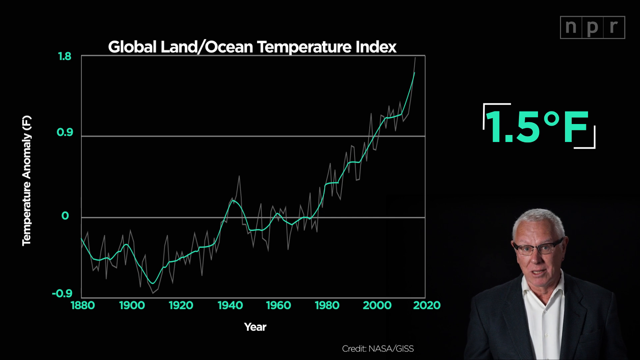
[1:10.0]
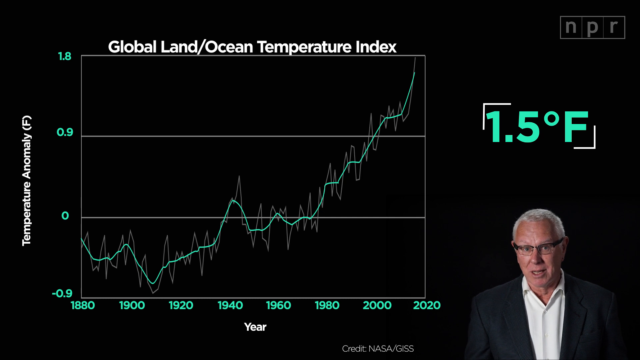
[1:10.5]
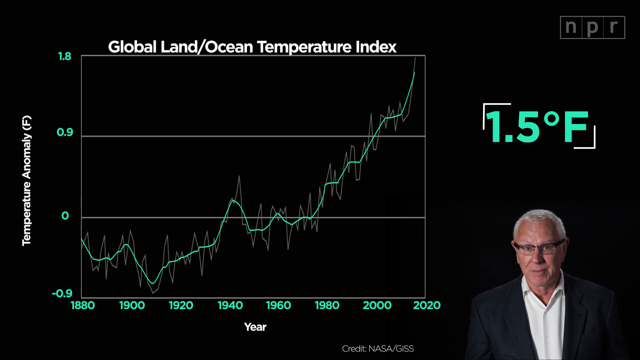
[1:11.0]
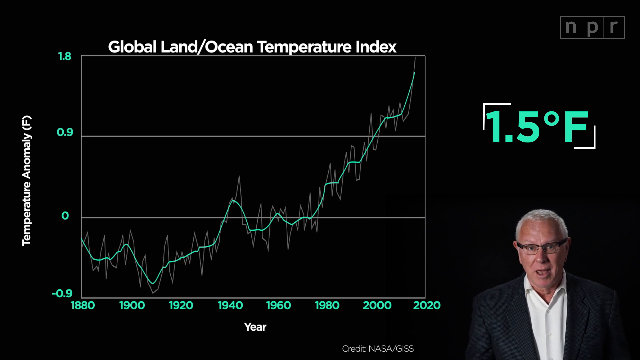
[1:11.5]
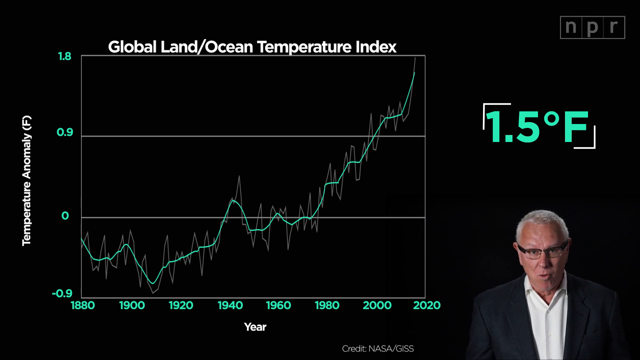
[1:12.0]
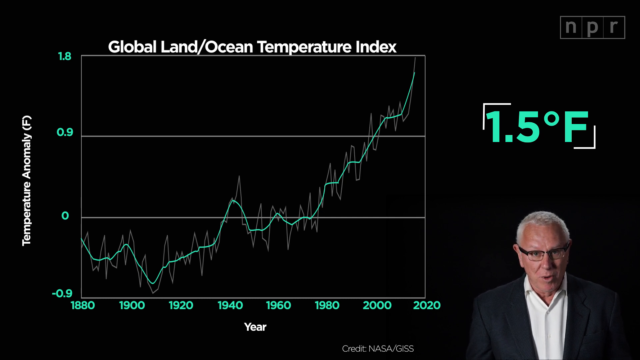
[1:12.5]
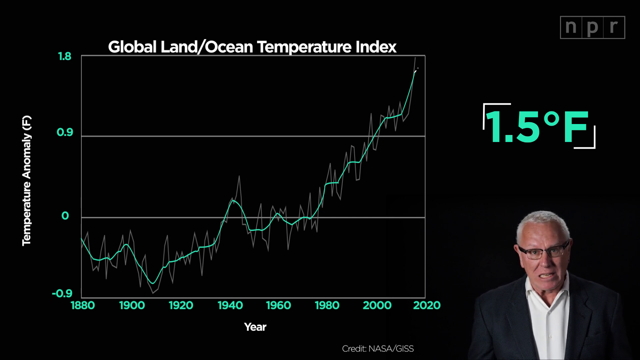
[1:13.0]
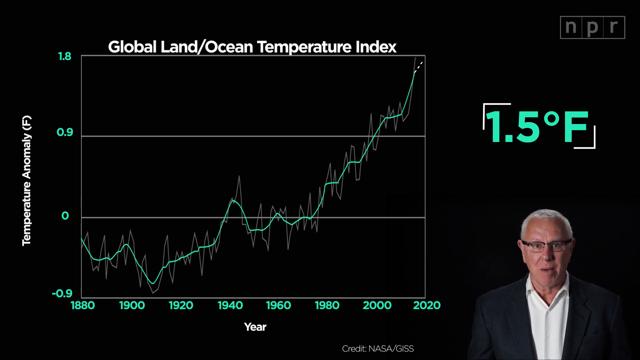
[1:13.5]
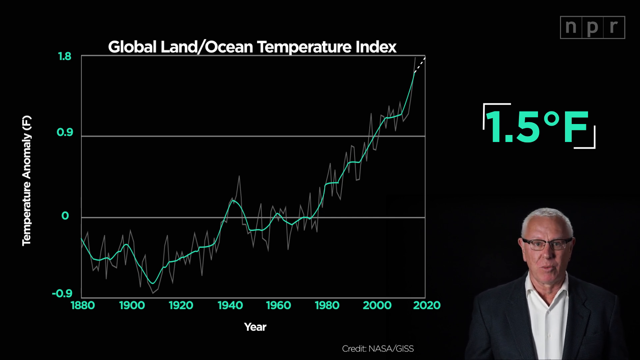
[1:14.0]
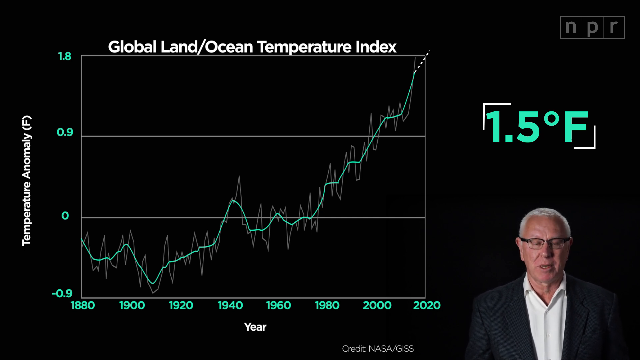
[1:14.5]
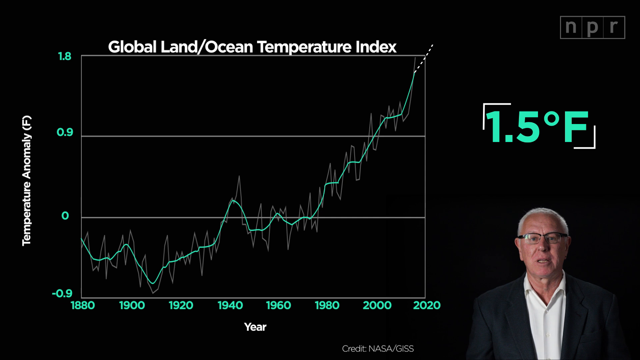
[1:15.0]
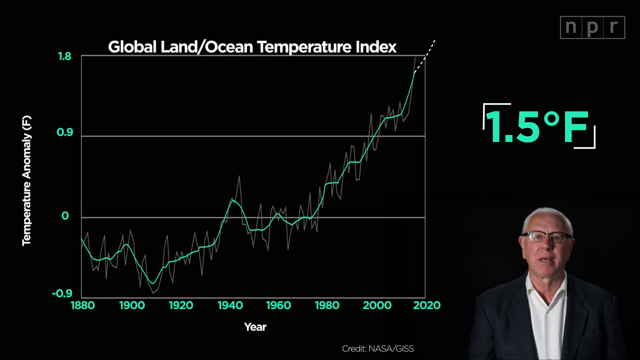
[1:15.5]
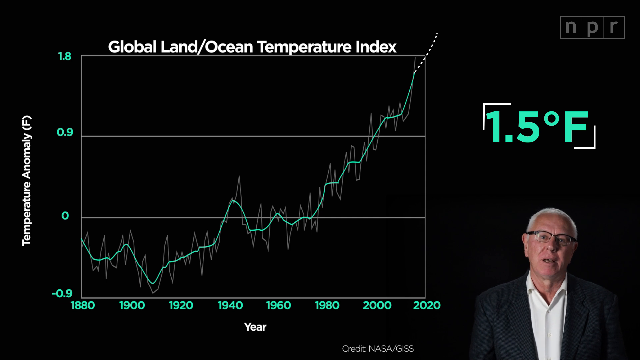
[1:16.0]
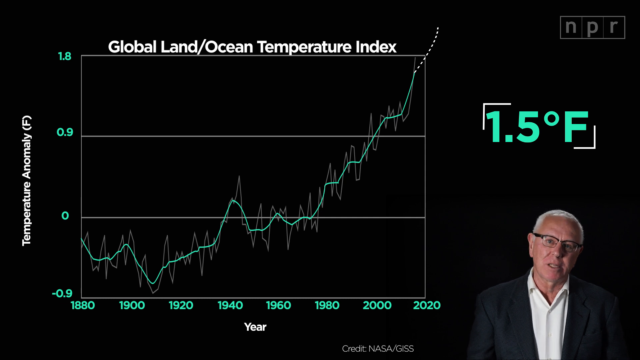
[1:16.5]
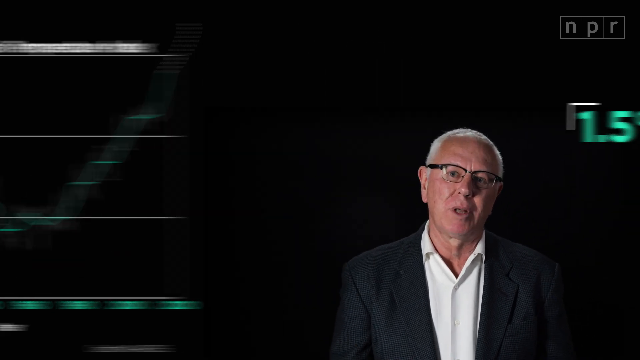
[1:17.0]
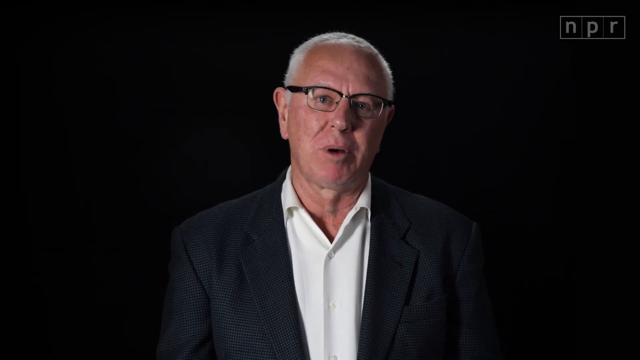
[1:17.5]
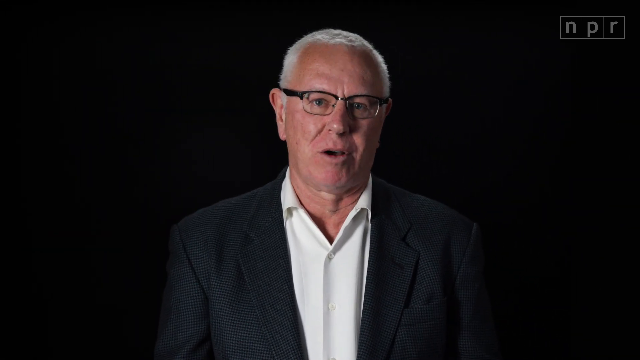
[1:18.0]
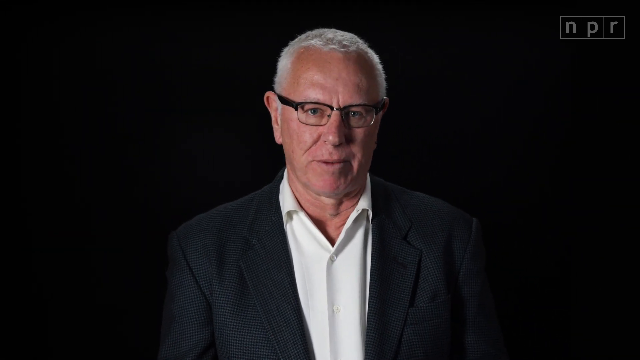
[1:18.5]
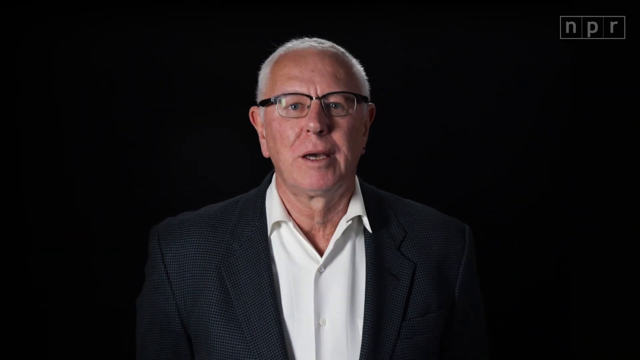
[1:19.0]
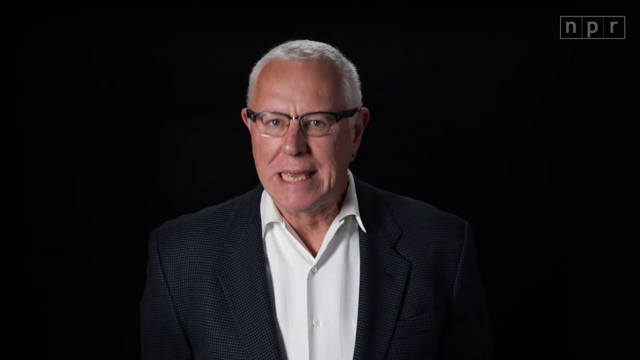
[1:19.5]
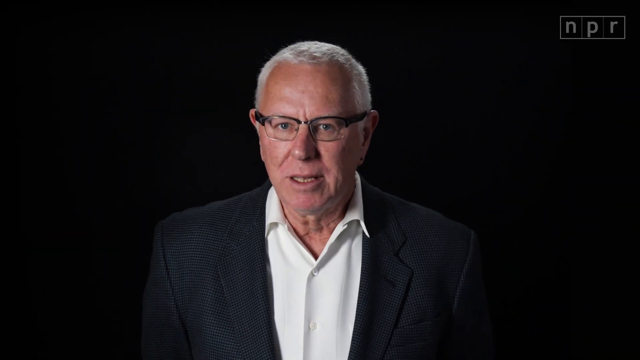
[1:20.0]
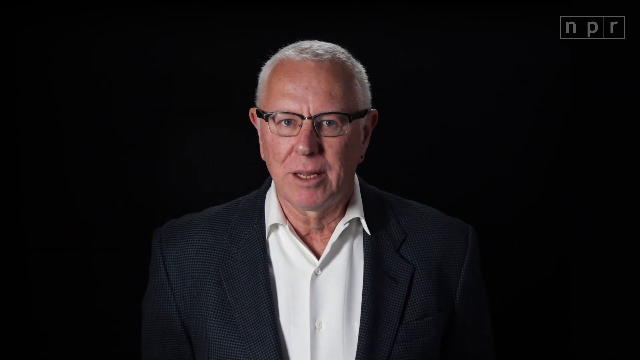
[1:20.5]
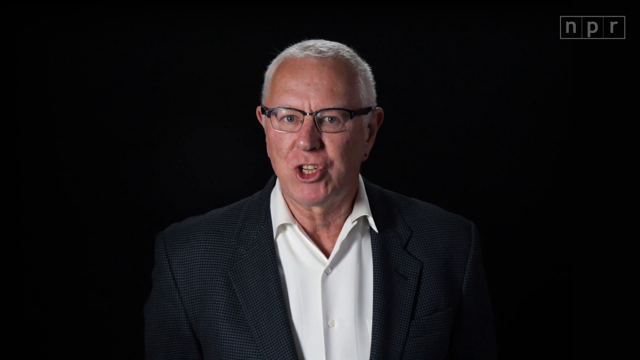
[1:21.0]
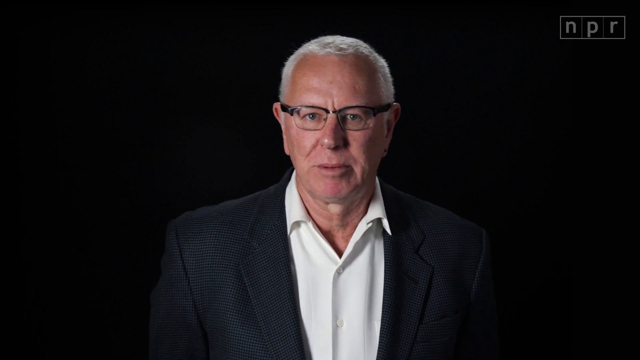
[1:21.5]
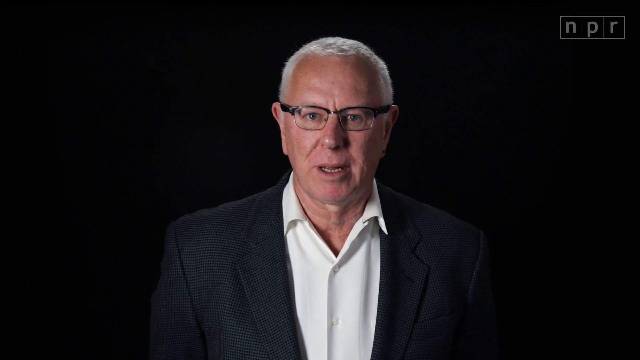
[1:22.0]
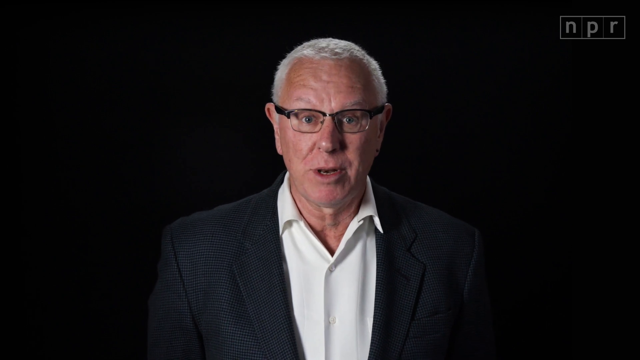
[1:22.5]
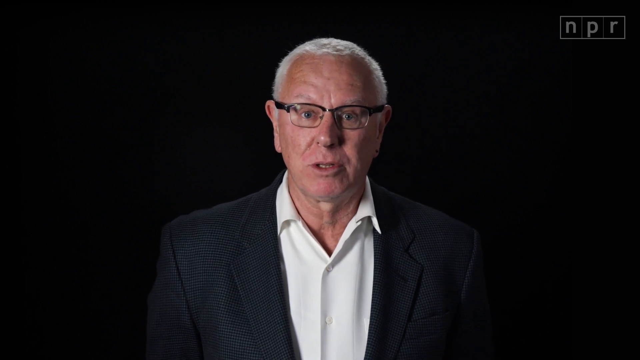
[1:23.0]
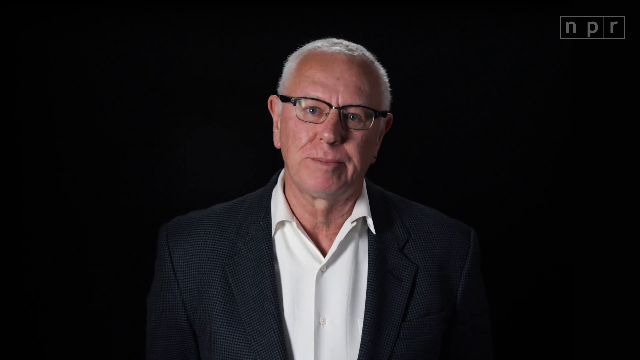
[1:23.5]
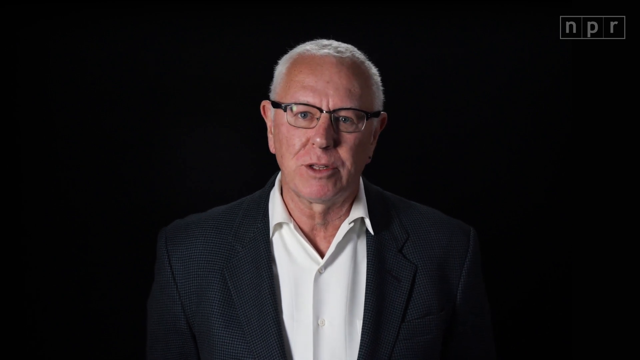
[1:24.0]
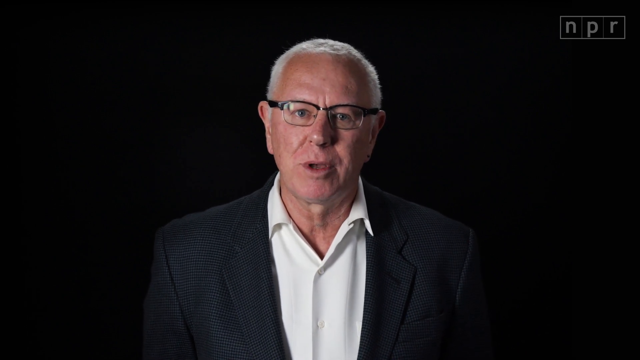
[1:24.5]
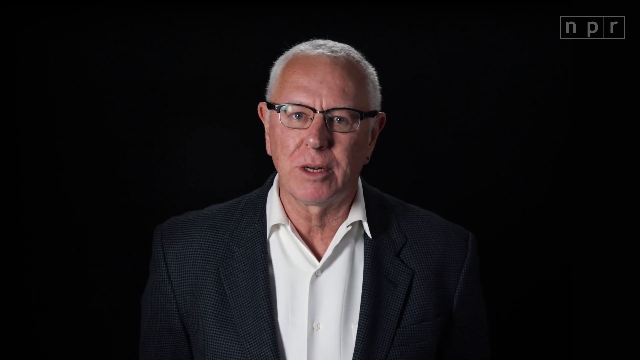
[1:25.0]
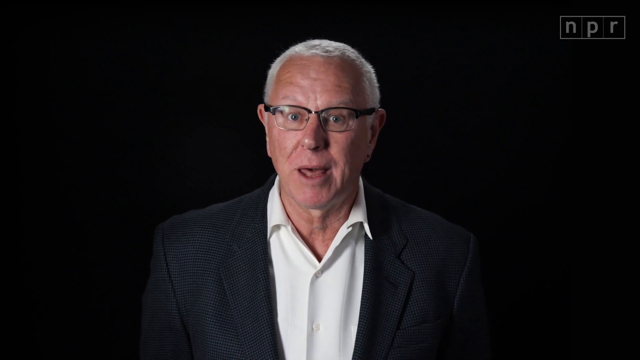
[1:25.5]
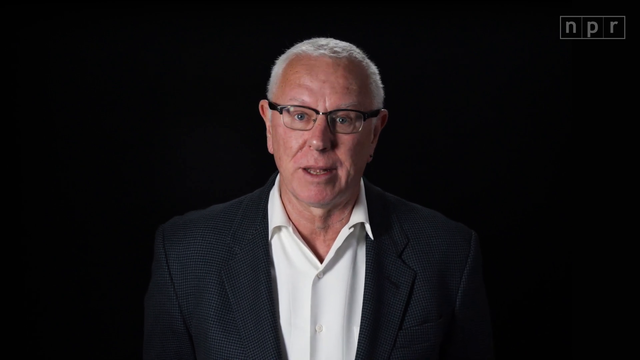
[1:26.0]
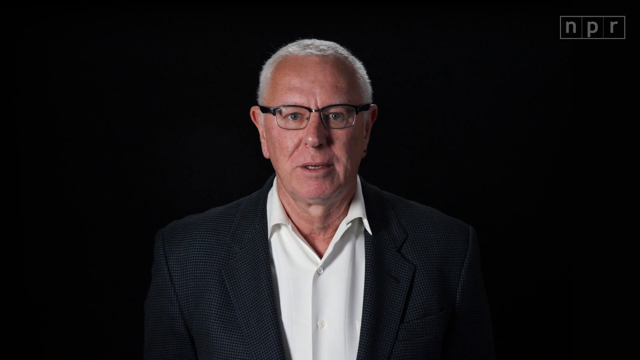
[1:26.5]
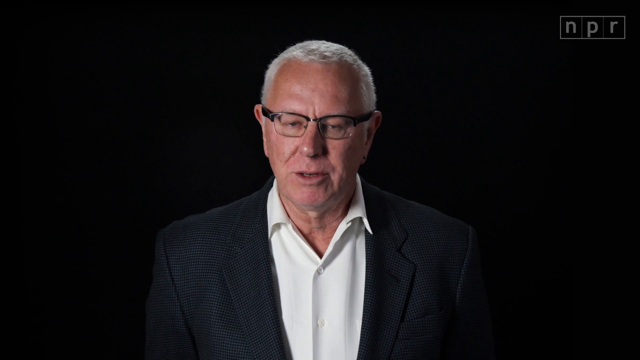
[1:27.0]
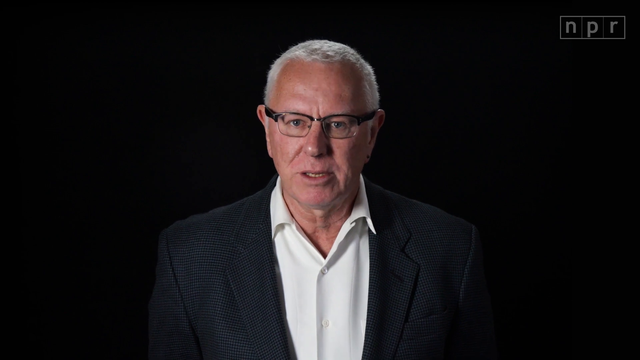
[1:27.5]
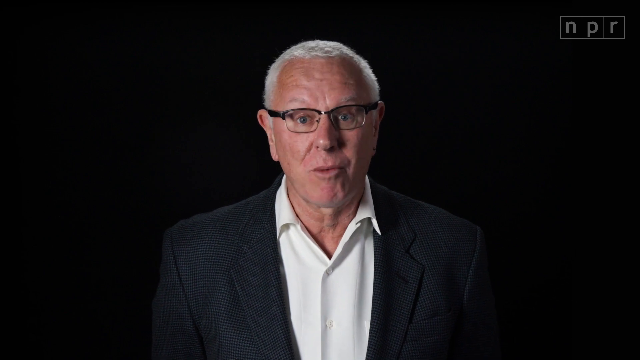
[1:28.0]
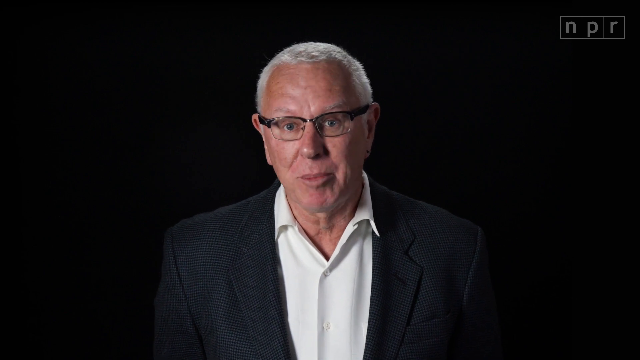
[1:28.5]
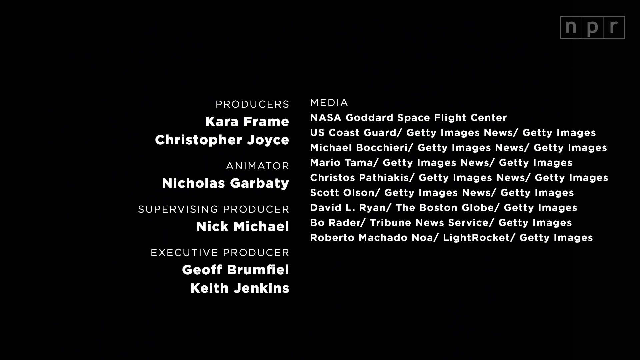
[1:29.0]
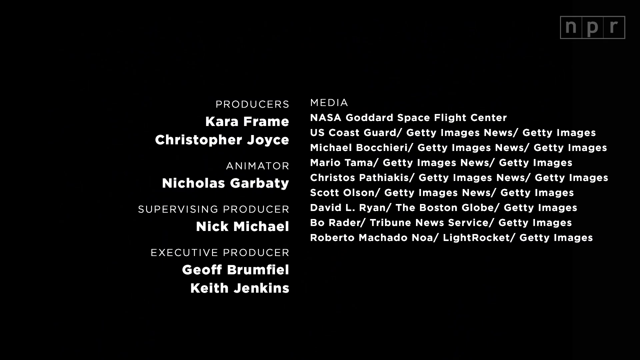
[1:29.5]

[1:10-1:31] A graph labeled "global land ocean temperature index" is on the screen, with the man in the lower right-hand corner. Above him, "1.5 degrees Fahrenheit" appears in a teal color. As the man talks about the graph, he is suddenly made full screen. He continues talking, turning his head just slightly but mostly looking right at the camera person. The video ends with credits listing producers Cara Frame and Christopher Joyce, animator Nicholas Garbatze, supervising producer Nick Michael, executive producer Jeff Brumfel, and Keith Jerkins. A media section lists a whole bunch of people as well.